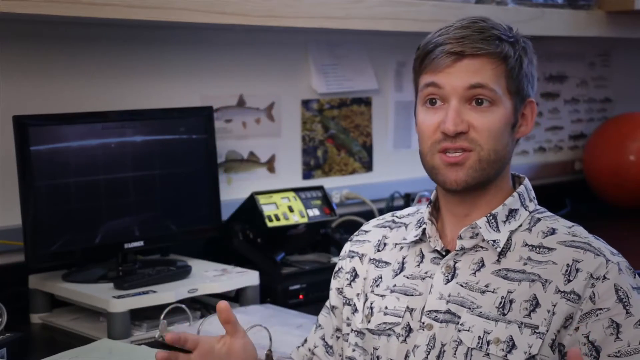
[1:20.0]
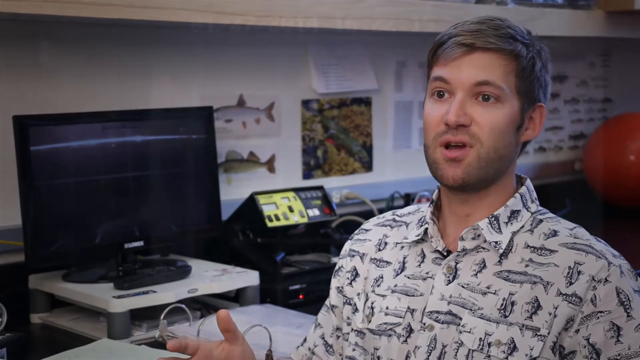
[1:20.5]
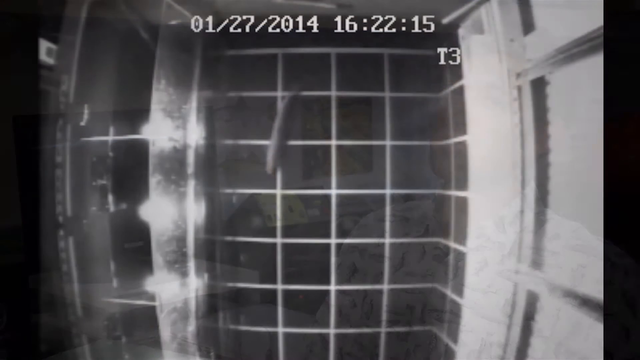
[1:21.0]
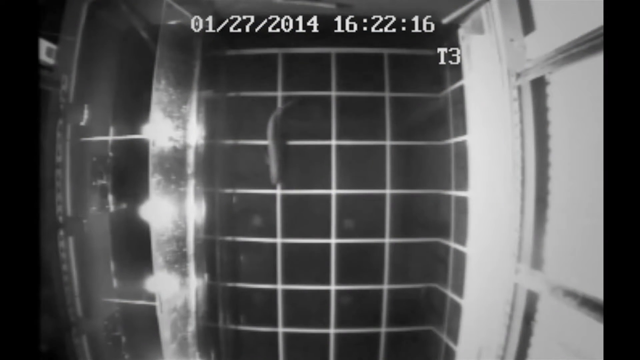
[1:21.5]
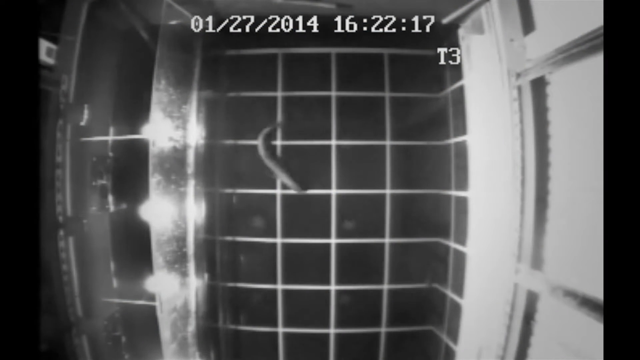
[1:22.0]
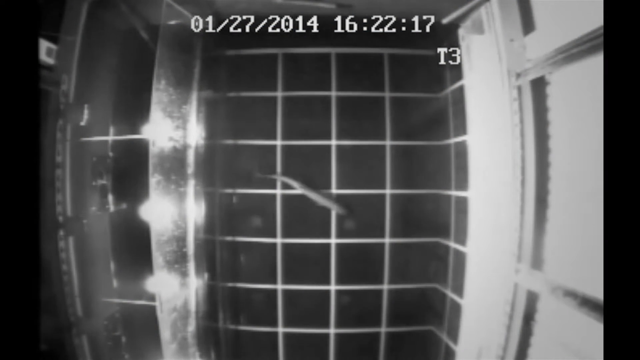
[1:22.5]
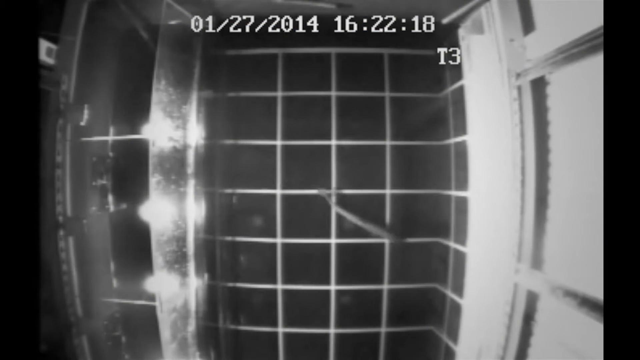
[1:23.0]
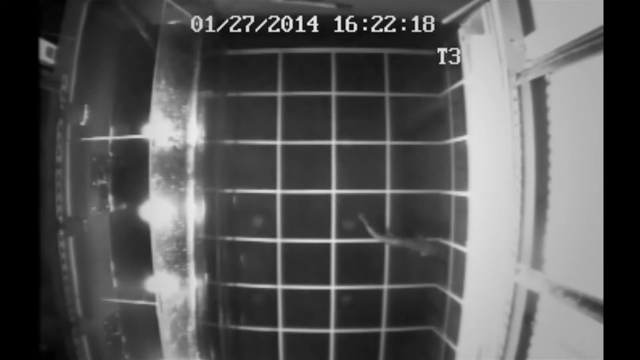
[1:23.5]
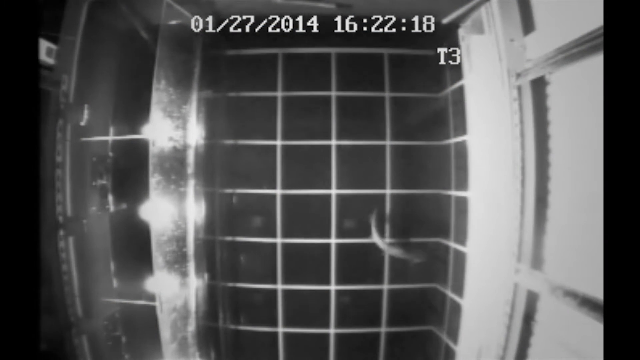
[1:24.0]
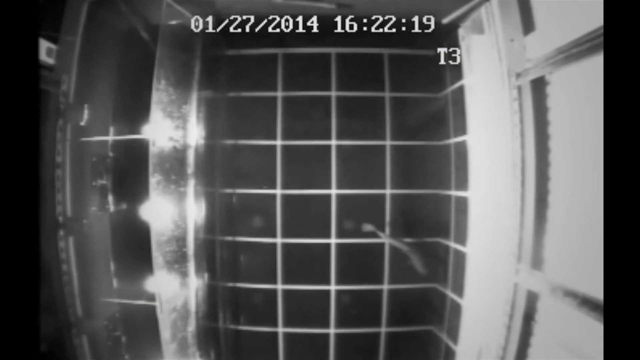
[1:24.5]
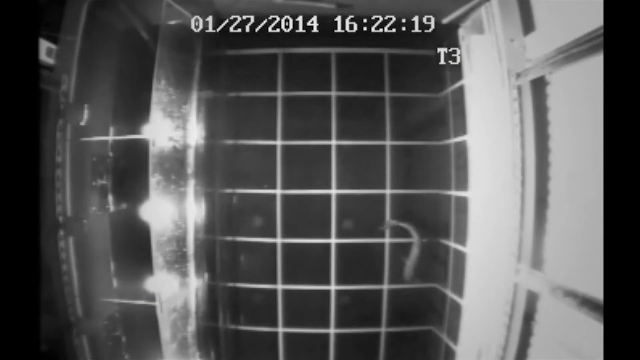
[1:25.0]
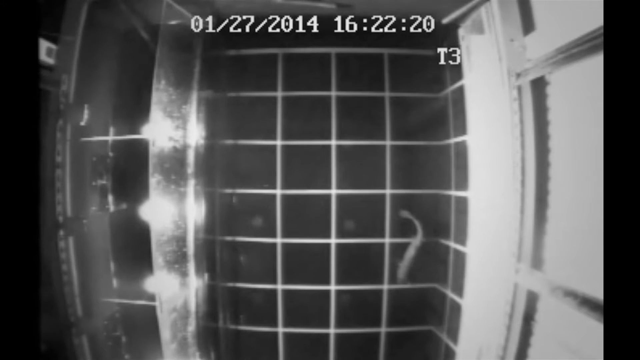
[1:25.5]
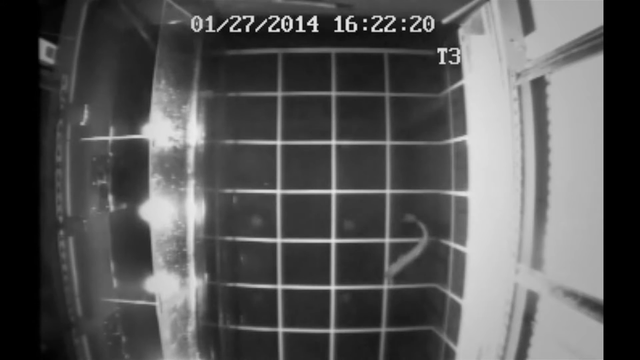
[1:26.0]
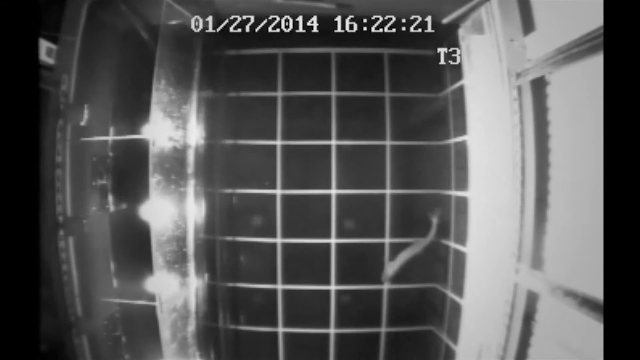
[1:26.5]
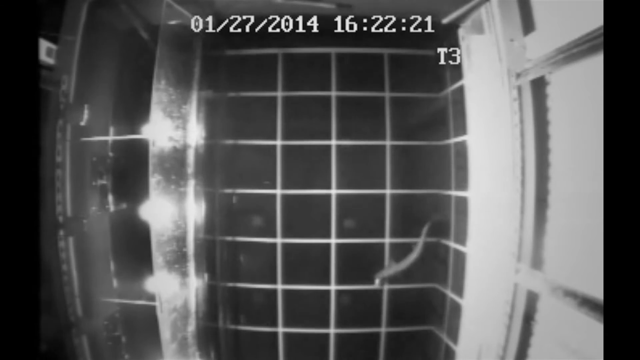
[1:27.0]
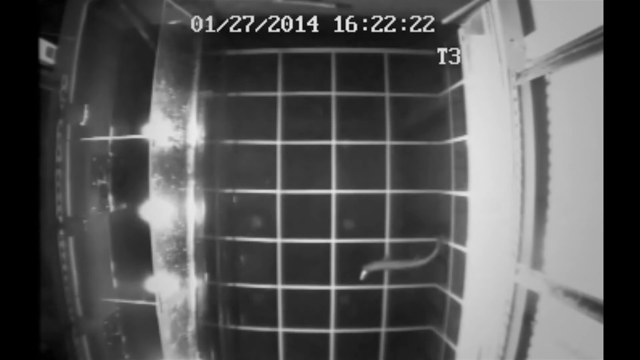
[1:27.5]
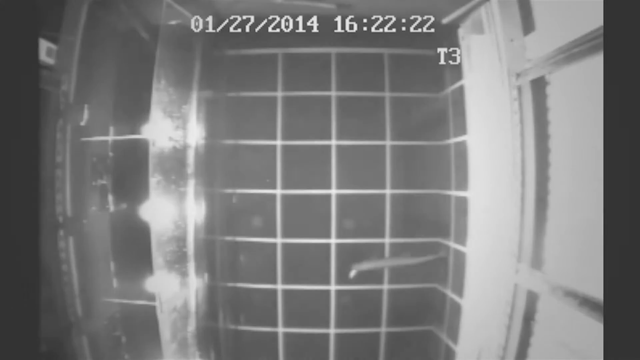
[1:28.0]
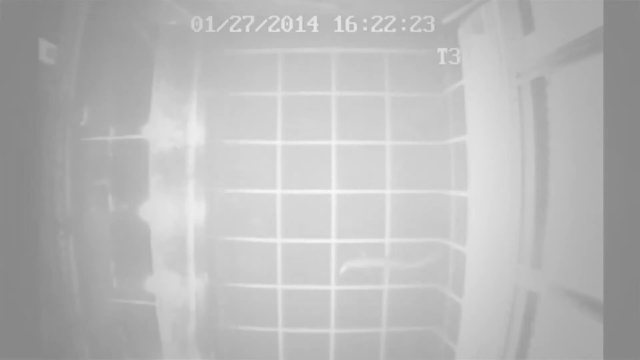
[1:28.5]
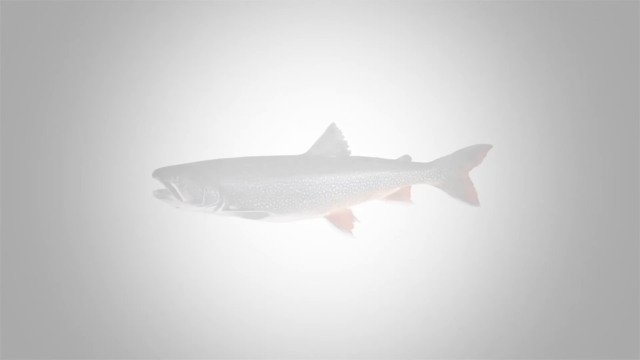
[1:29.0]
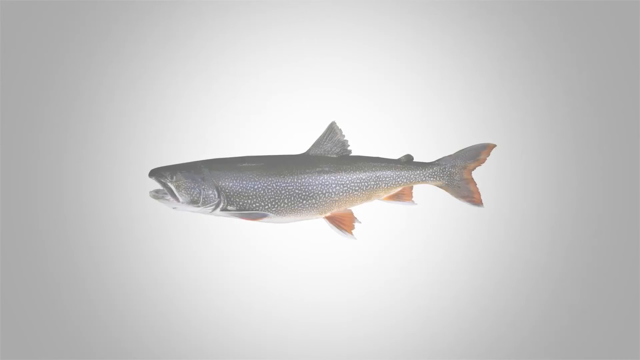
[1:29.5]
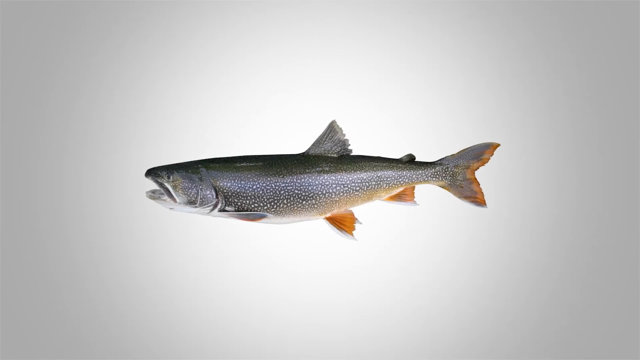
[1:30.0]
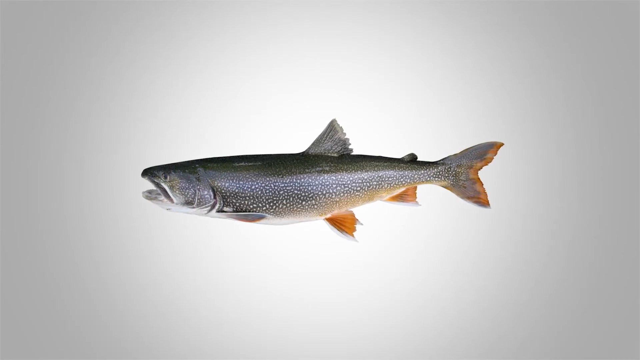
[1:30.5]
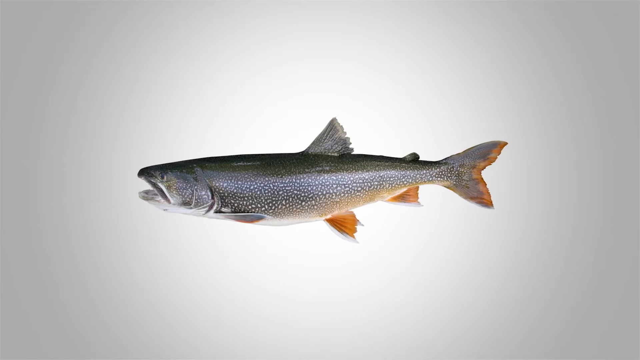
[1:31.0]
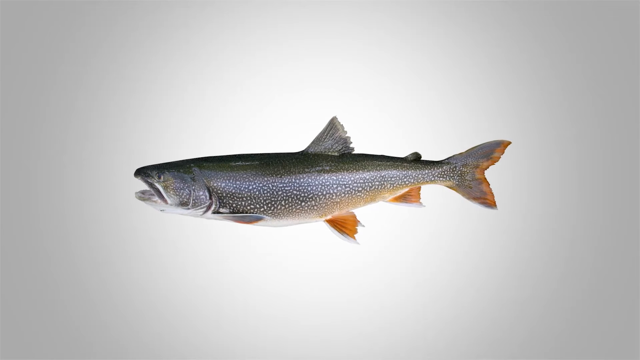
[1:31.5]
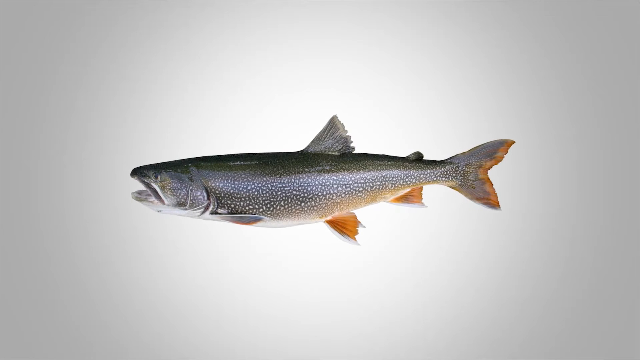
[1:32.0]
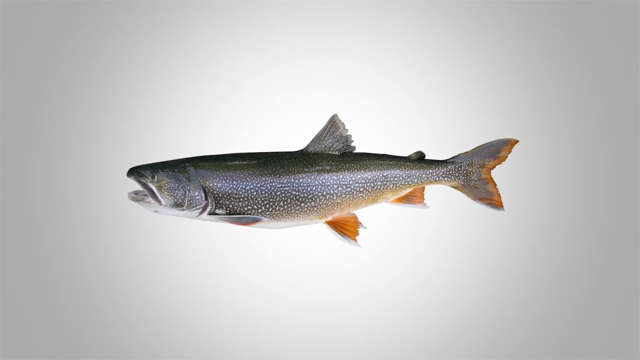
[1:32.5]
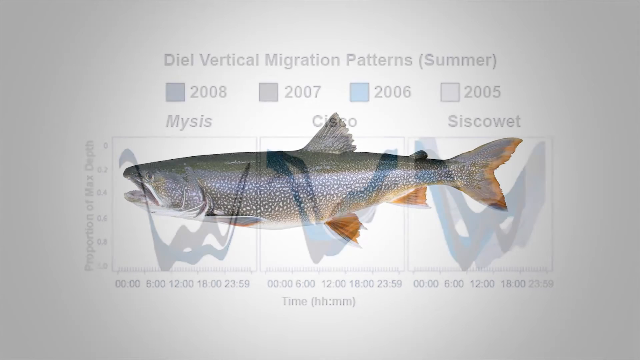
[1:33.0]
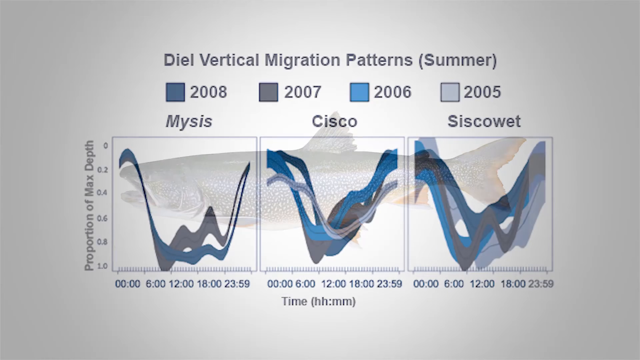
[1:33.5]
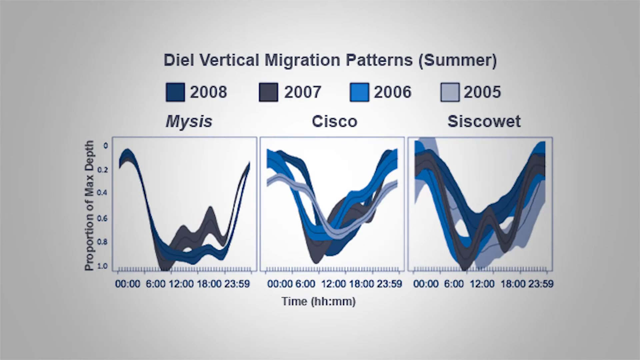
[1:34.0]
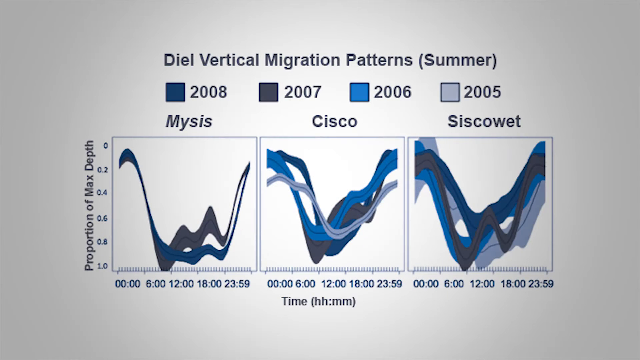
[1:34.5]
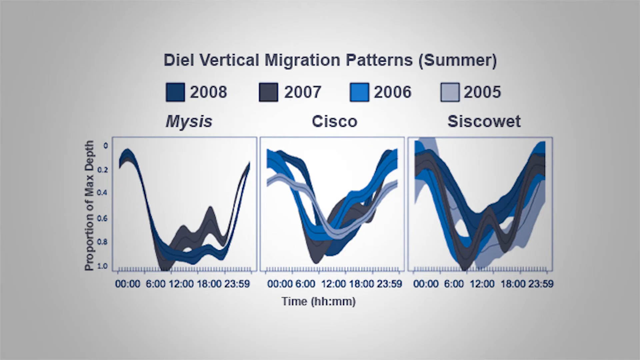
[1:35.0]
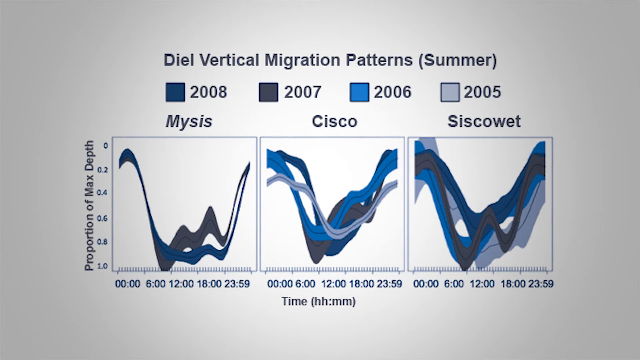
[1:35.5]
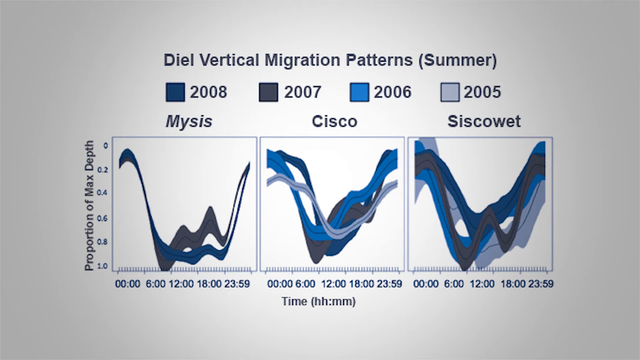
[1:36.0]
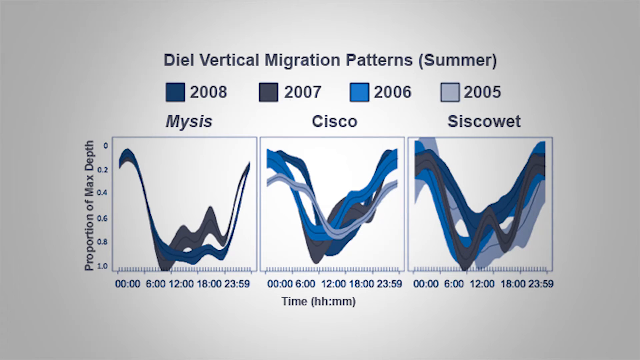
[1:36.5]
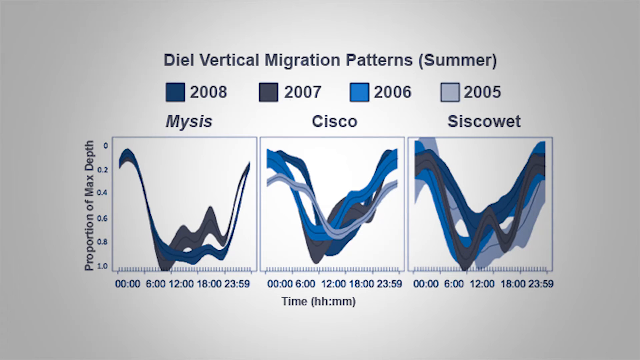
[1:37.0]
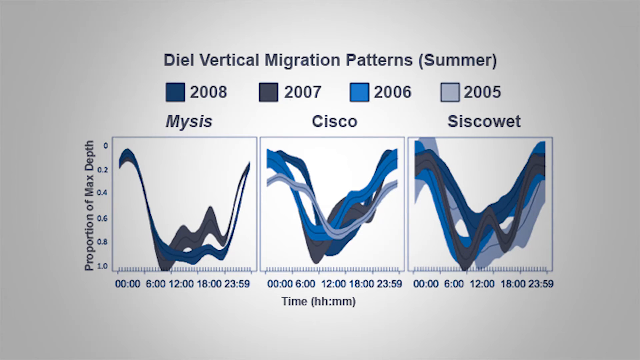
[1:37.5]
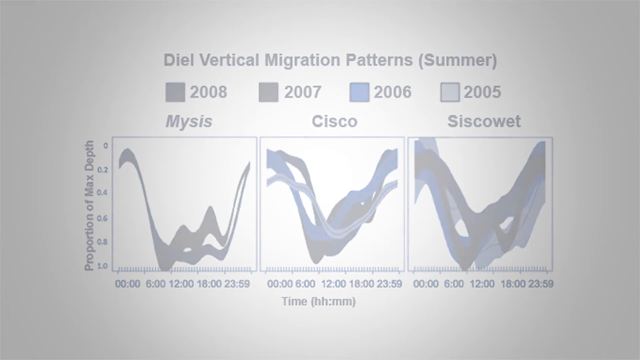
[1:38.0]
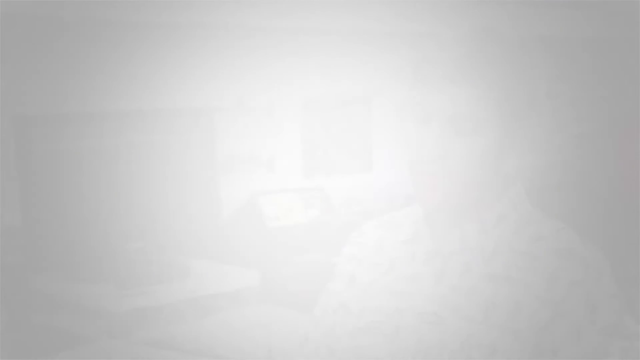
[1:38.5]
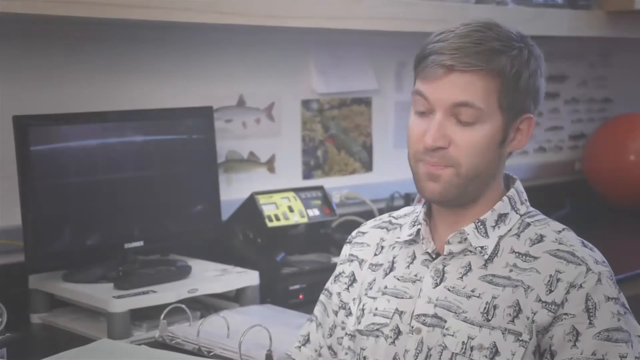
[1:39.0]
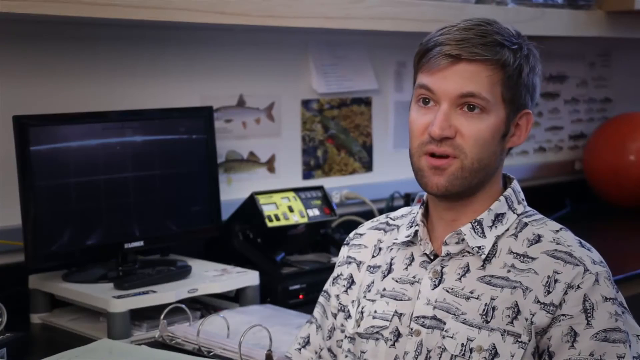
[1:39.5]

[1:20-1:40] Underwater night-vision footage with a fisheye GoPro effect carries the date 1-27-2014 and shows what looks like a little shrimp swimming slowly and slenderly around in a cage. Next is a picture of some type of fish that is gray with little speckles, with an orange fin at the bottom, a gray fin at the top, and a big frown on its face. Then a chart shows vertical migration patterns in the summer, giving years 2008 through 2005 and entries for Mysis, Sisqo and Sisqo wet, plotting proportion of max depth against time. The video returns to the man in the office in the white shirt with fish on it, sitting in front of his desk with the computer on it. There is a red vial on his desk in the background and a bunch of photos of fish on the wall, and he is explaining.